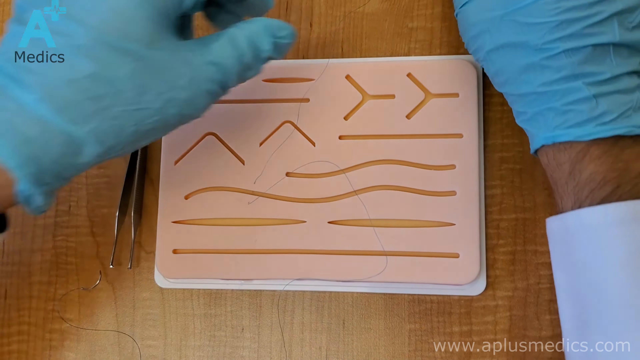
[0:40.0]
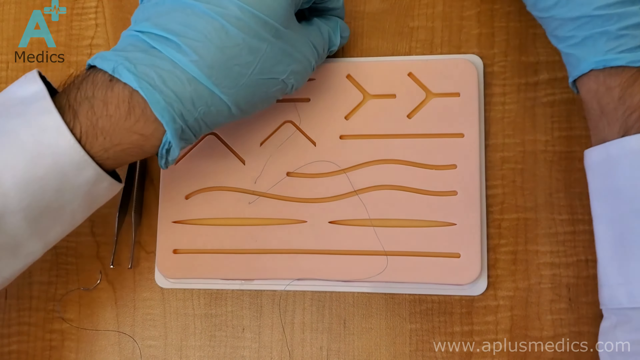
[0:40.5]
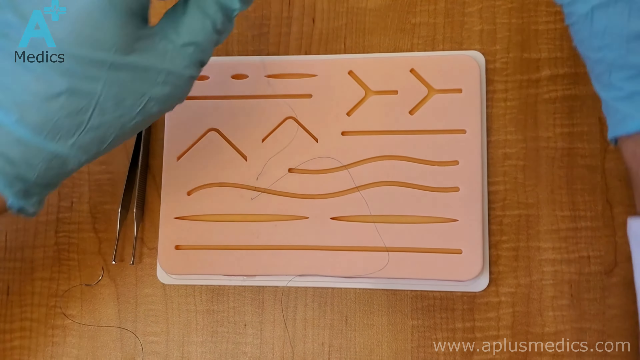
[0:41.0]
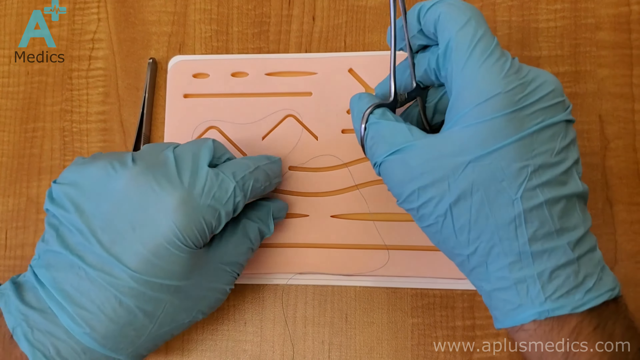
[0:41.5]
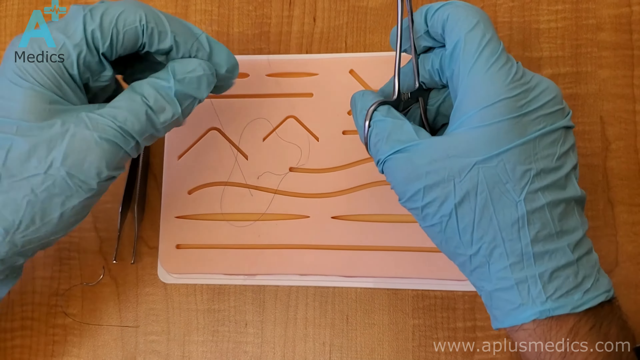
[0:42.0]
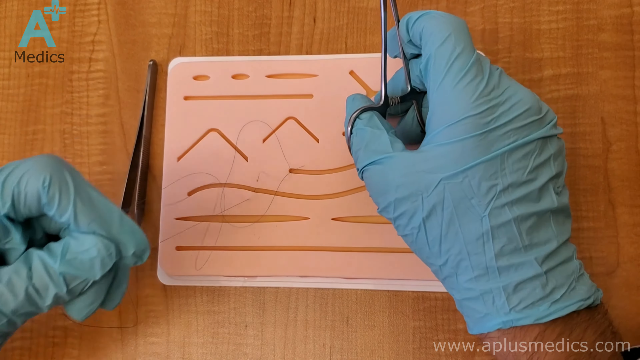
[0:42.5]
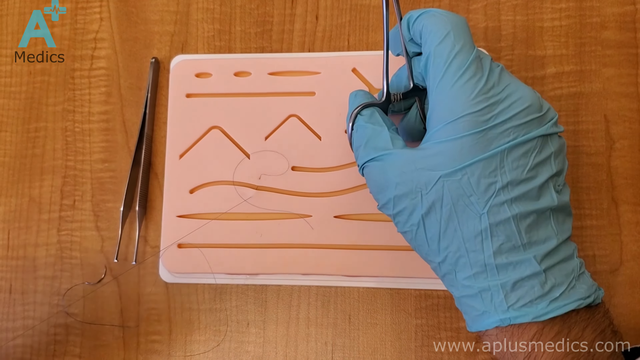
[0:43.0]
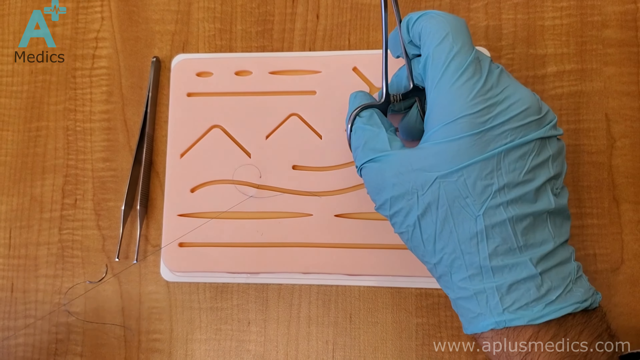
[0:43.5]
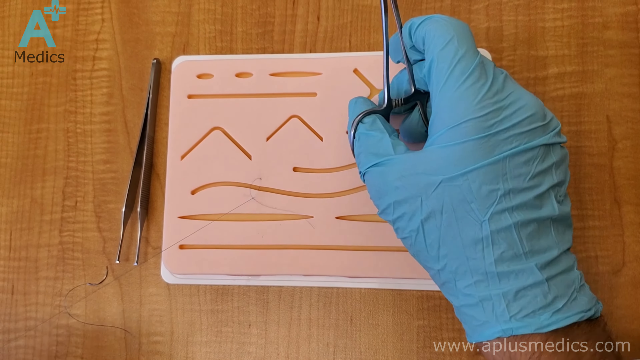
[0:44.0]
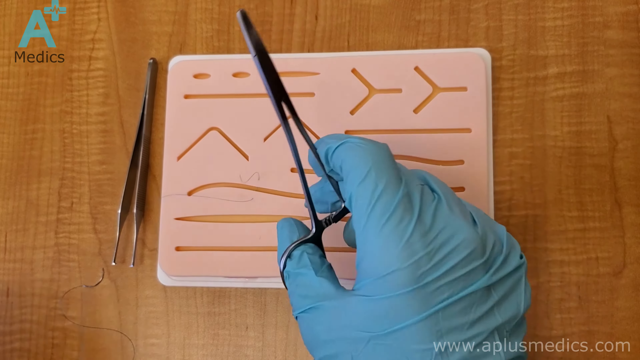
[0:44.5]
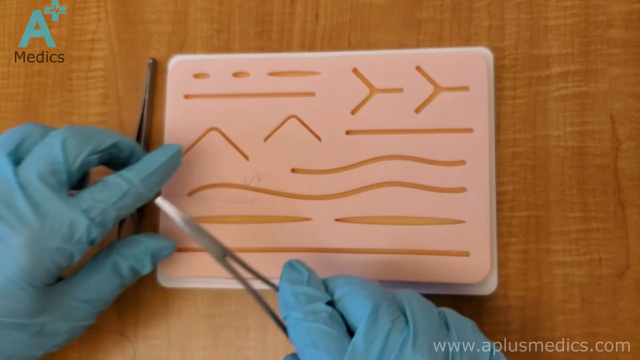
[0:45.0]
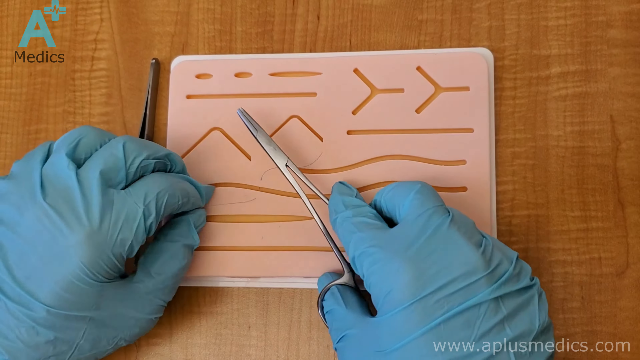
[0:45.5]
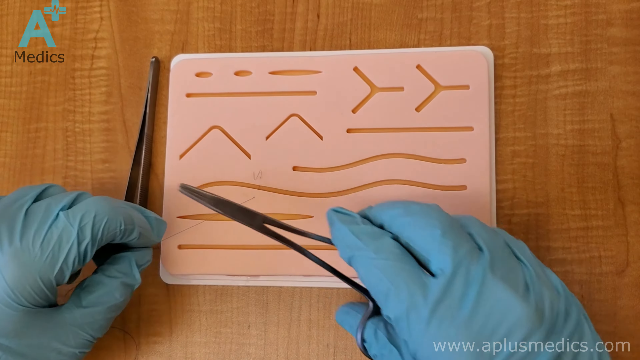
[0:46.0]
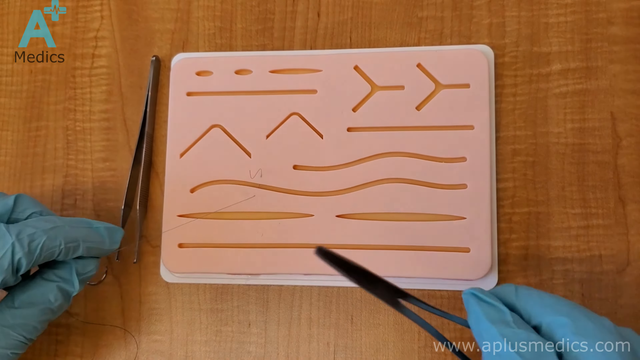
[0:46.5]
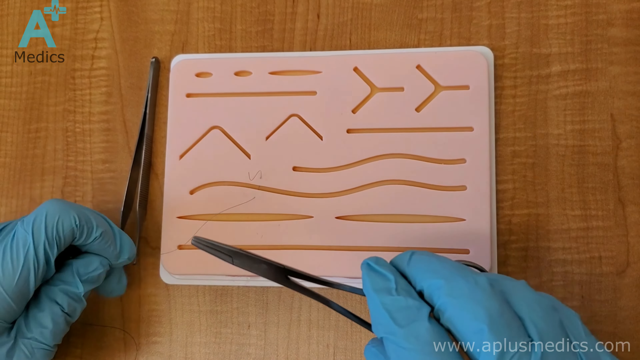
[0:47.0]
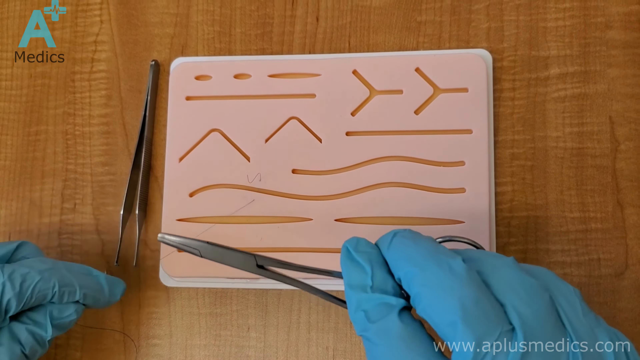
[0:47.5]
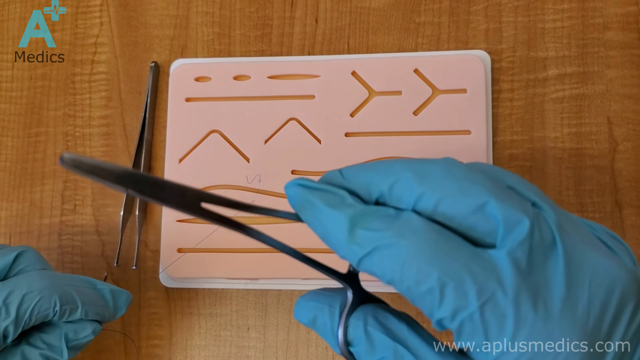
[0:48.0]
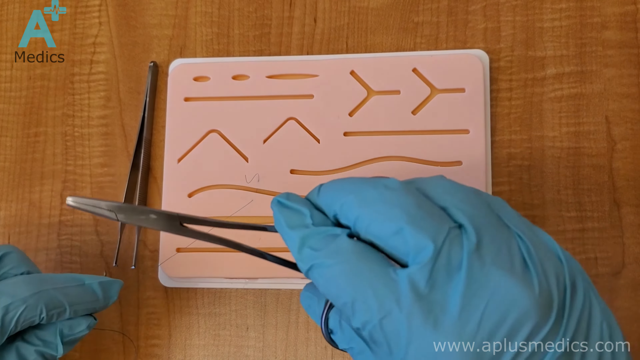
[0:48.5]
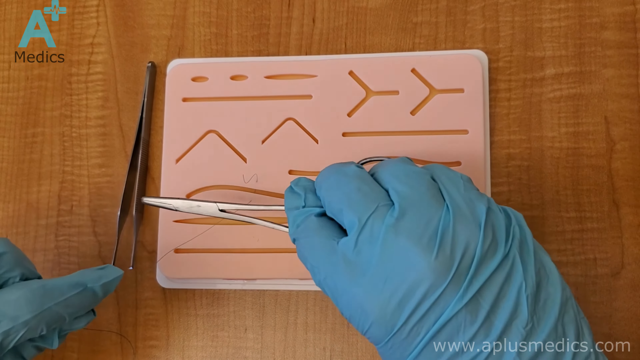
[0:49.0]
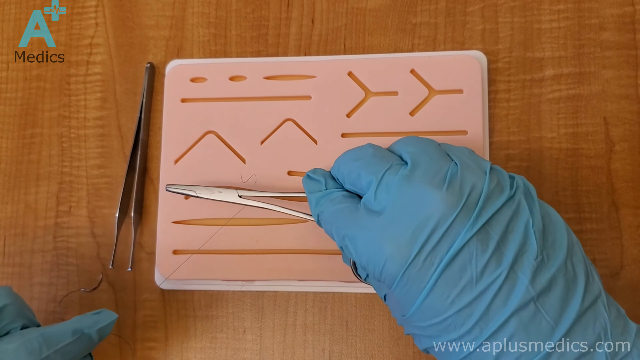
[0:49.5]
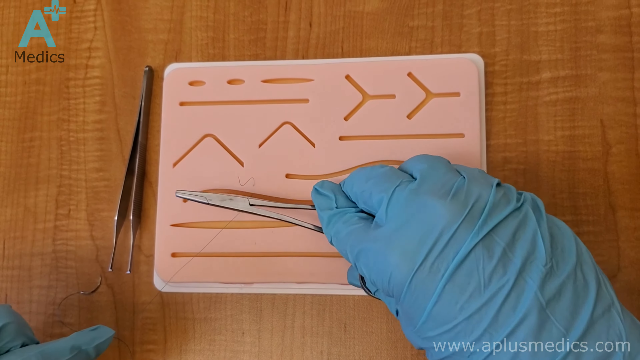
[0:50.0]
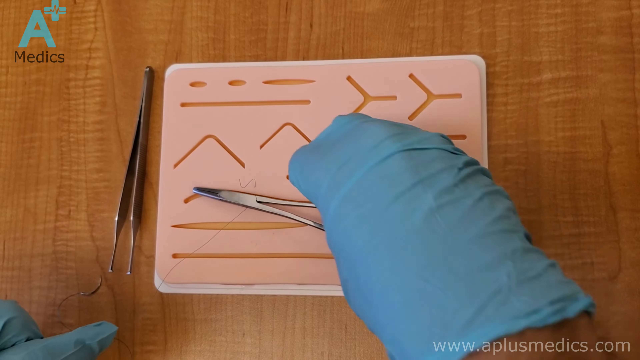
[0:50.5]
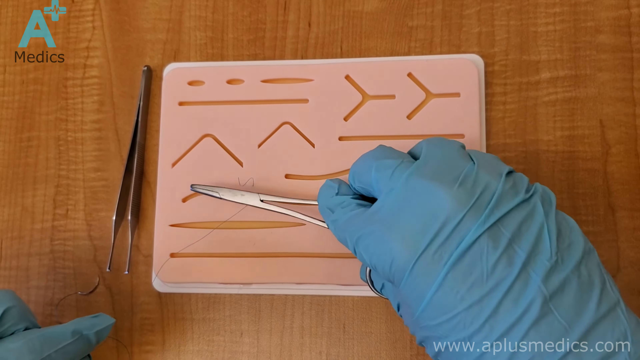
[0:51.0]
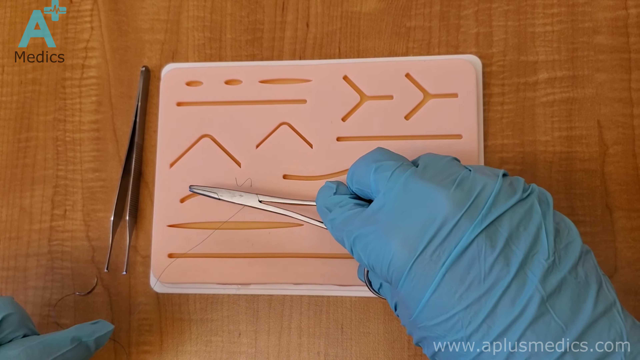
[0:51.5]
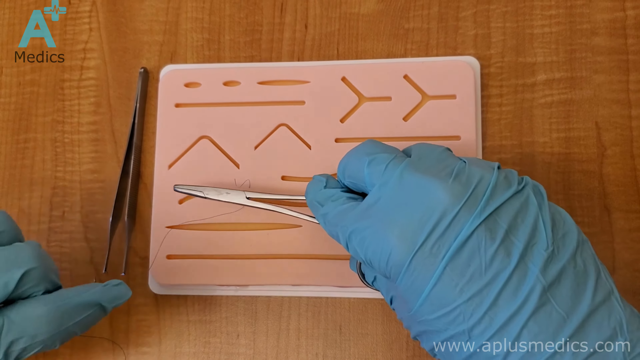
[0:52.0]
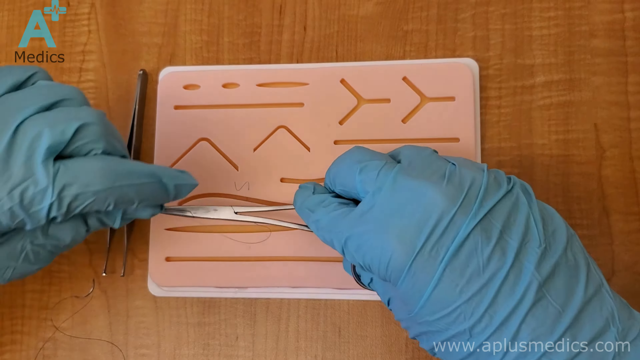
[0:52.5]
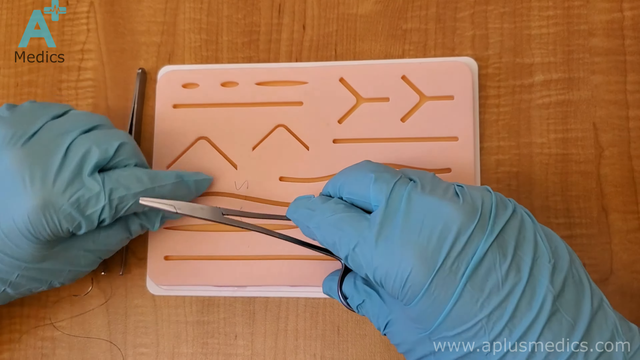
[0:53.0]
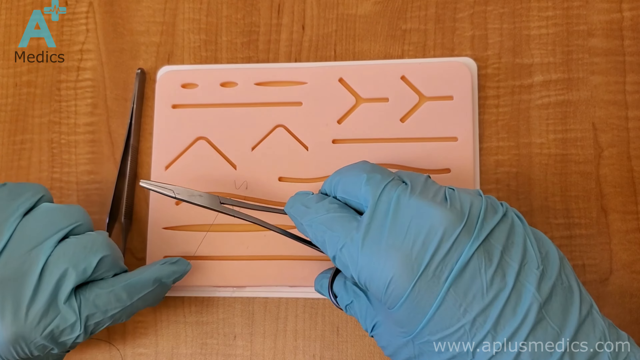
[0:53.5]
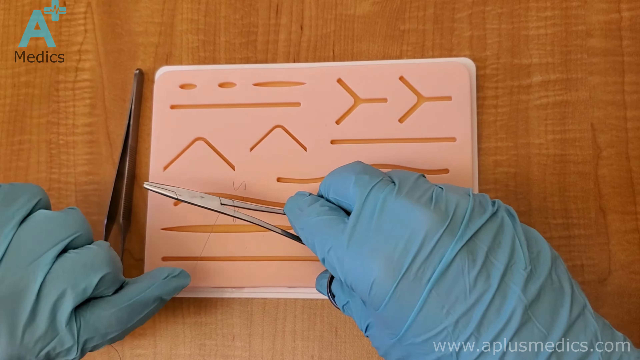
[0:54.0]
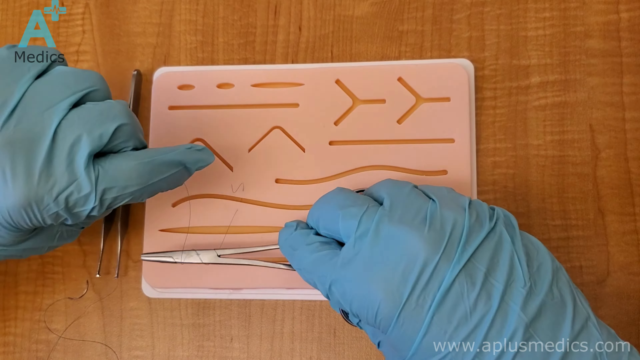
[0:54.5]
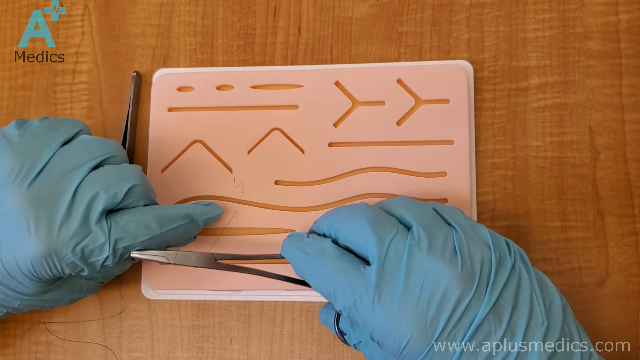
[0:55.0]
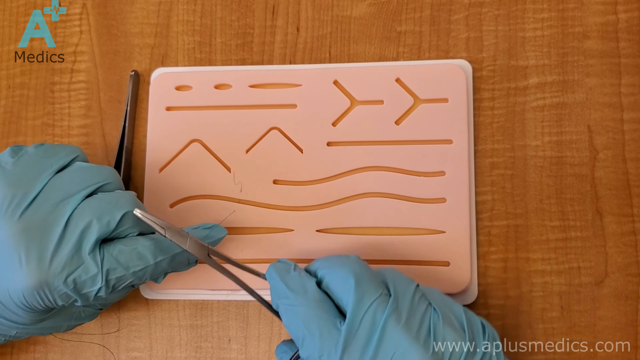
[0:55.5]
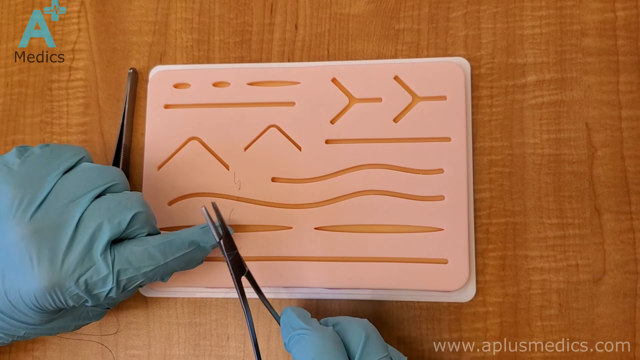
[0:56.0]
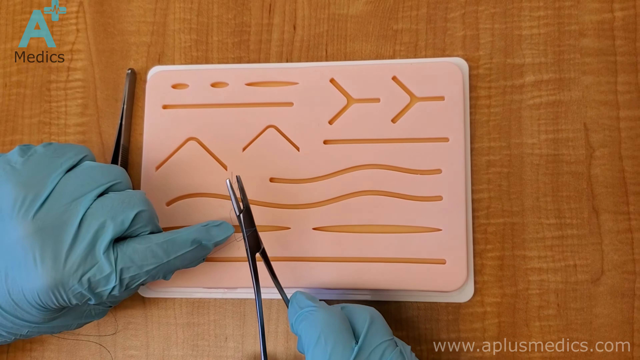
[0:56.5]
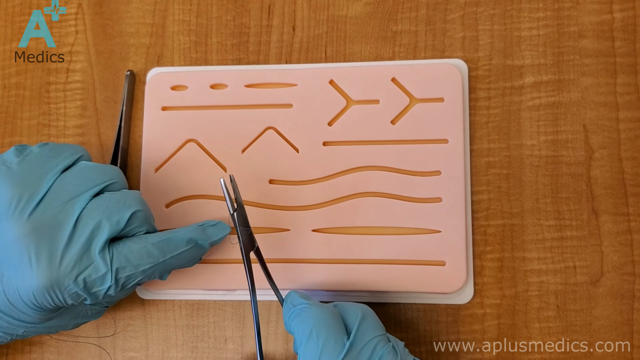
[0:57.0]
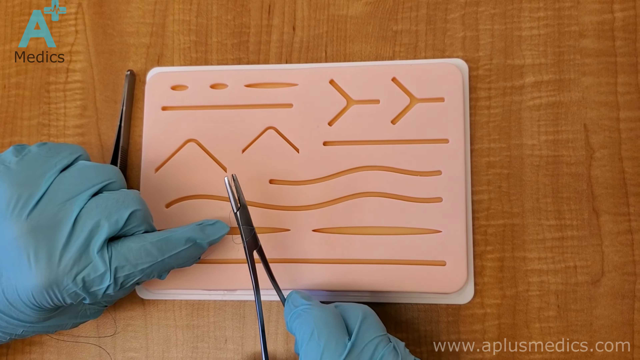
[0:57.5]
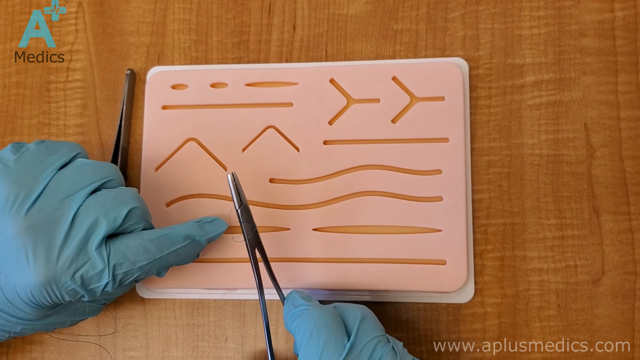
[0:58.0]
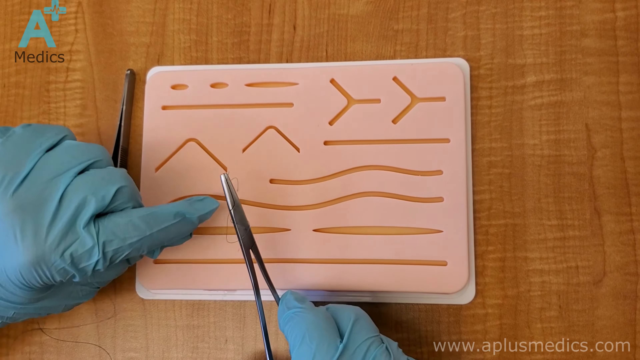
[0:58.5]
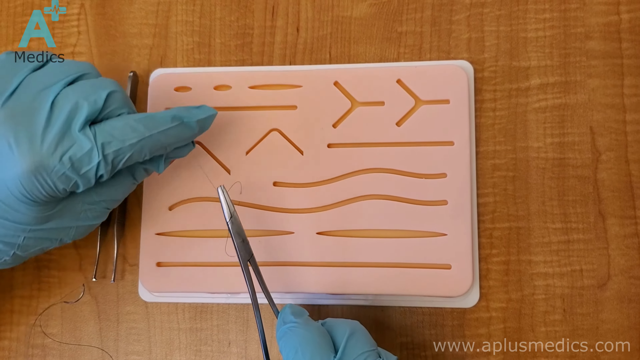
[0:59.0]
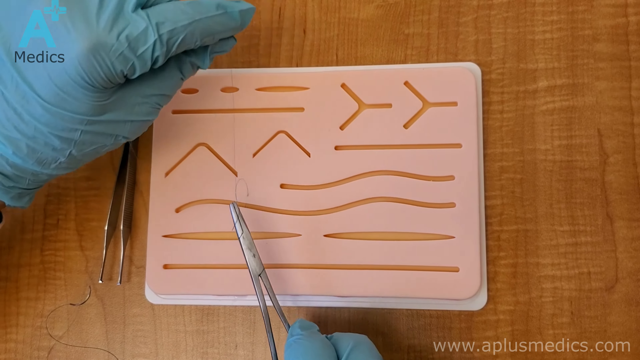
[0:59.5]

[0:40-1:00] The person wearing turquoise rubber gloves keeps working over a little rectangular object, almost like a small rectangular surface that is either rubberized or maybe made of foam. The object has many different grooves in different shapes, apparently so that people can practice stitching up wounds of different shapes and sizes. Holding the scissor in the right hand, the person pulls a thread through one of the grooves. The left hand pulls the thread through, holding it with the fingers, and winds some of it around the blades of the scissor in the right hand. Finally, the person cuts the thread. The person's face is never seen, only the gloves, and the string is very hard to see because it is very fine and light in color. "A+ Medics" is still in the upper left-hand corner of the screen.